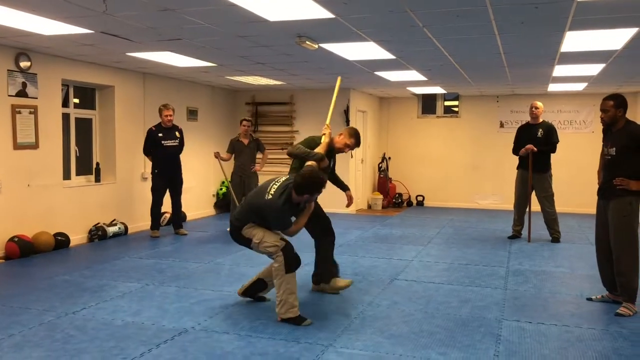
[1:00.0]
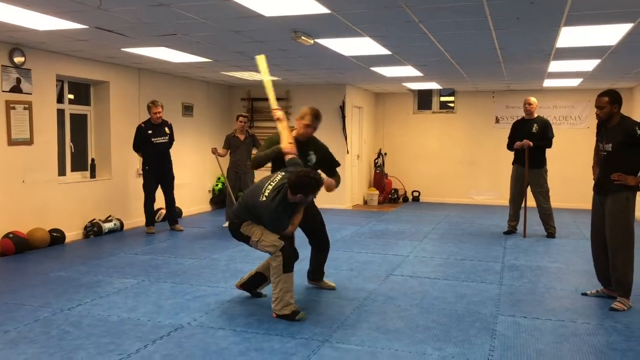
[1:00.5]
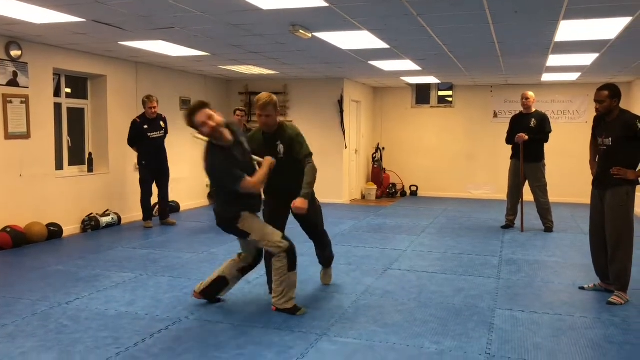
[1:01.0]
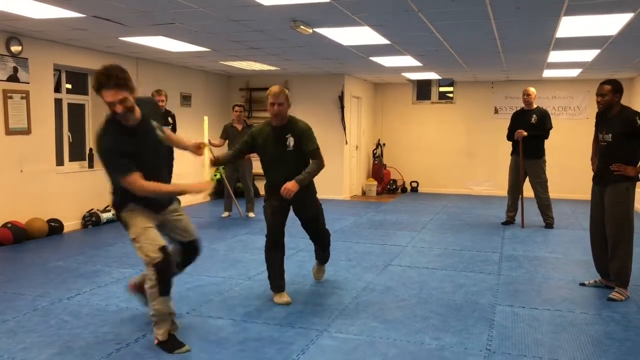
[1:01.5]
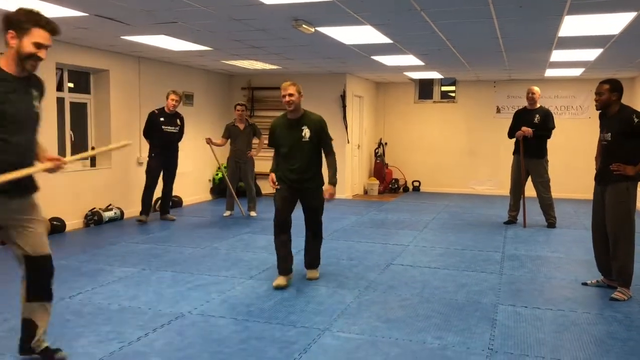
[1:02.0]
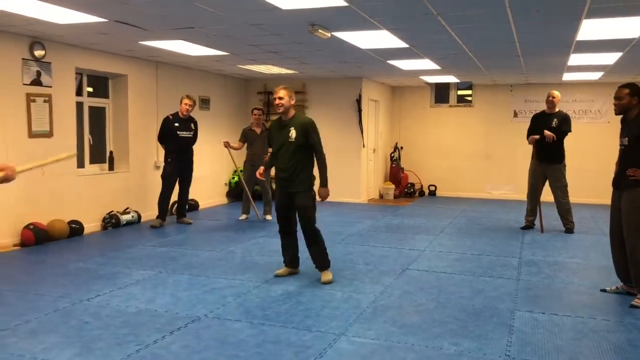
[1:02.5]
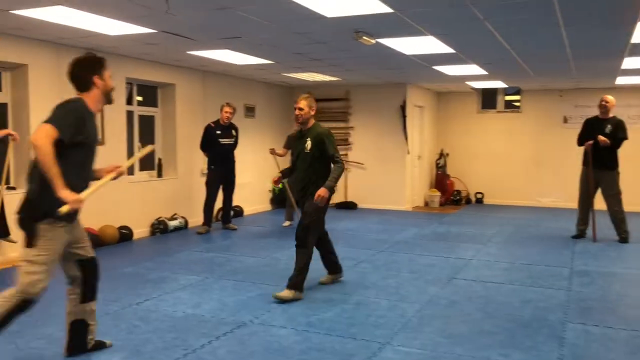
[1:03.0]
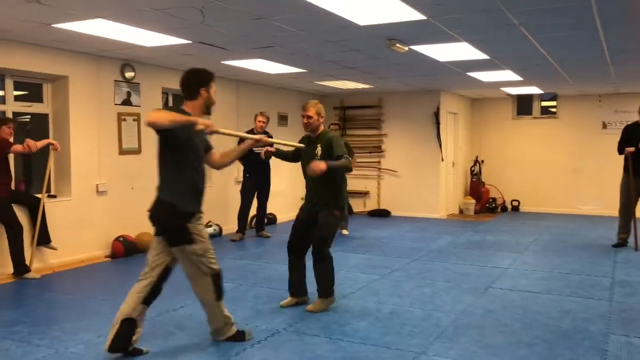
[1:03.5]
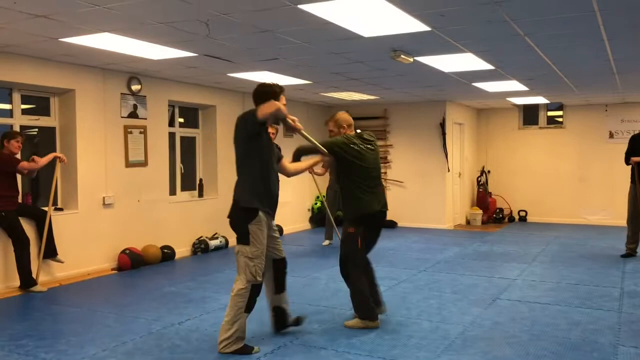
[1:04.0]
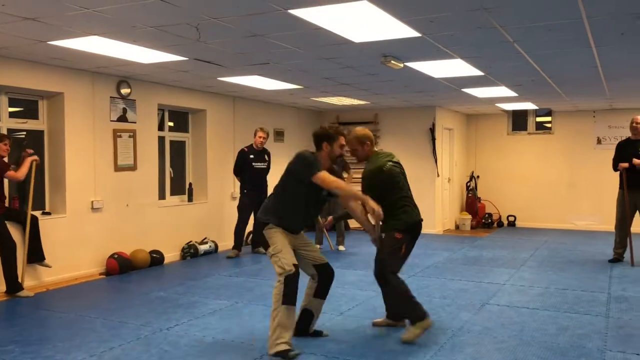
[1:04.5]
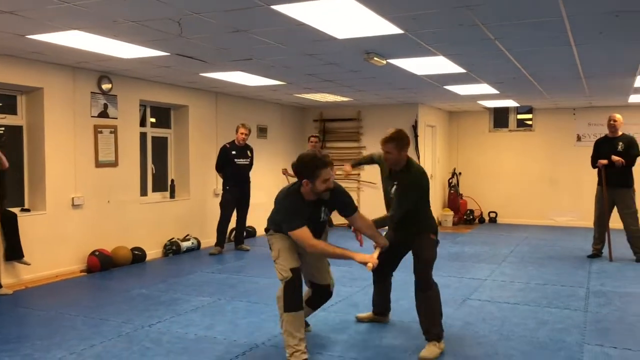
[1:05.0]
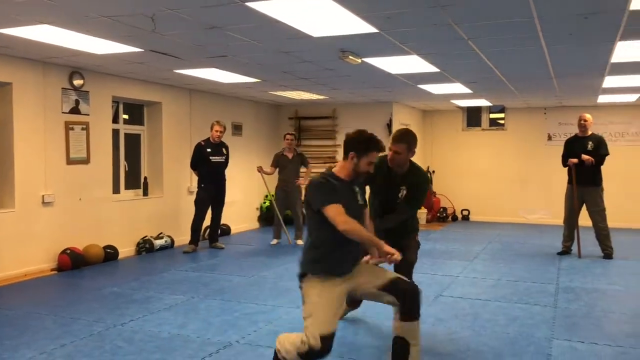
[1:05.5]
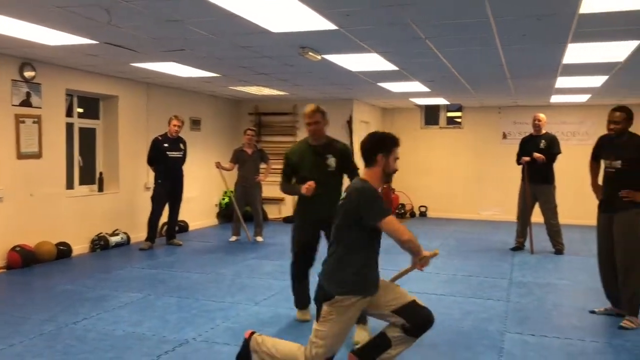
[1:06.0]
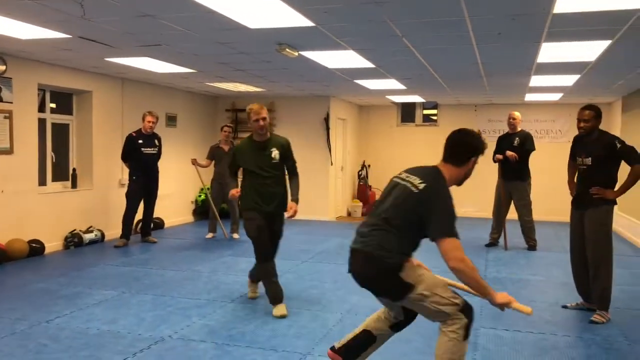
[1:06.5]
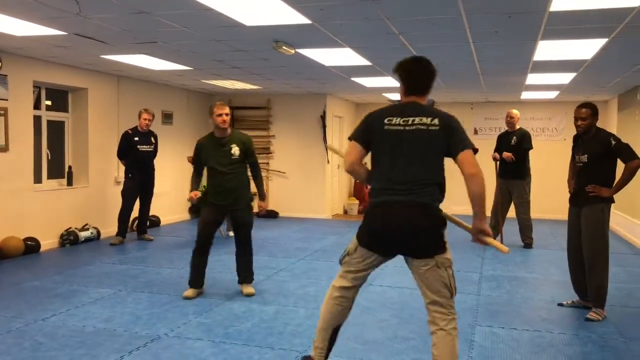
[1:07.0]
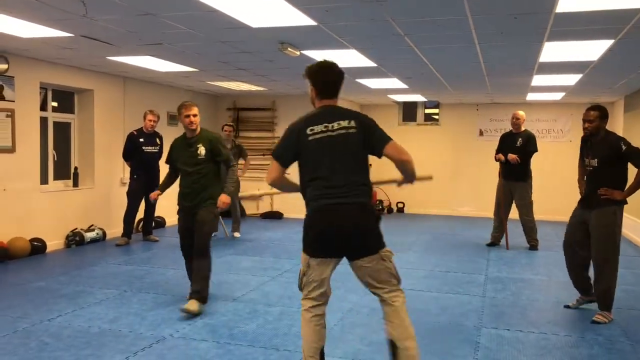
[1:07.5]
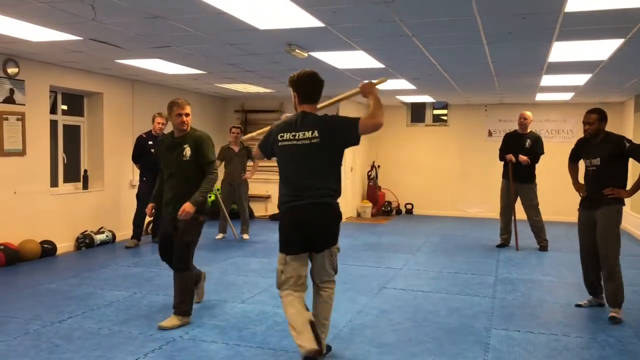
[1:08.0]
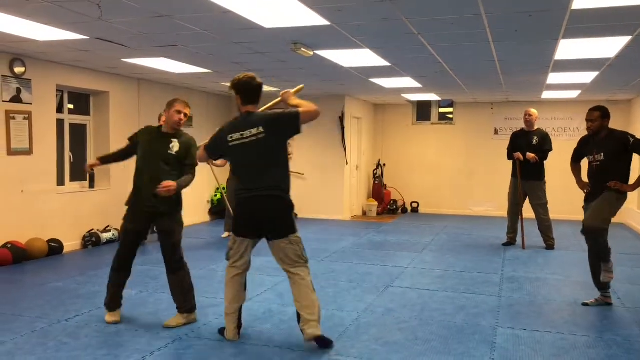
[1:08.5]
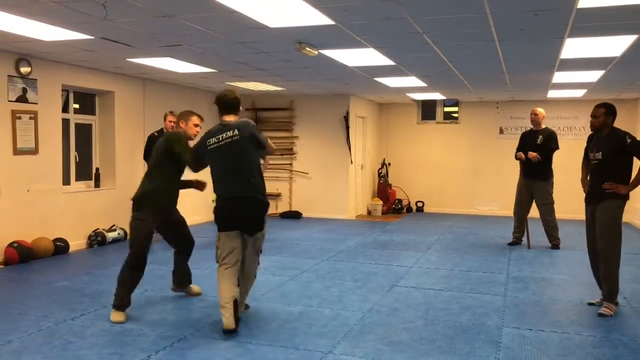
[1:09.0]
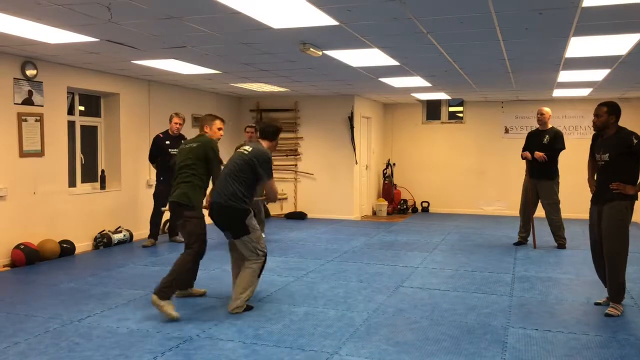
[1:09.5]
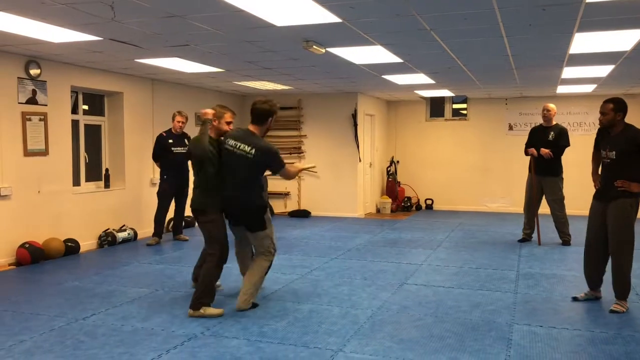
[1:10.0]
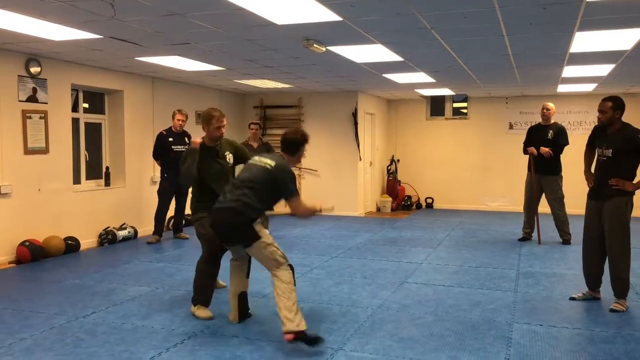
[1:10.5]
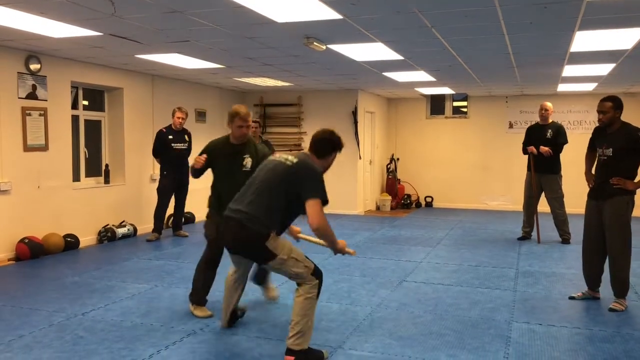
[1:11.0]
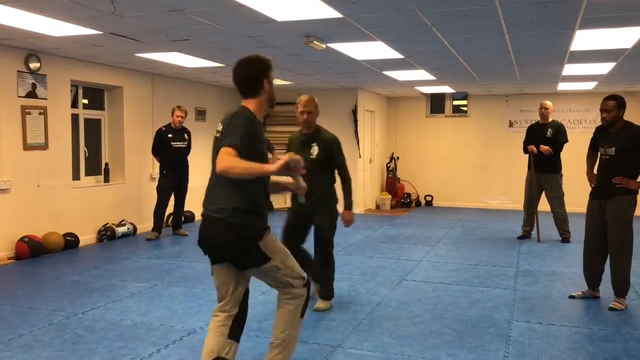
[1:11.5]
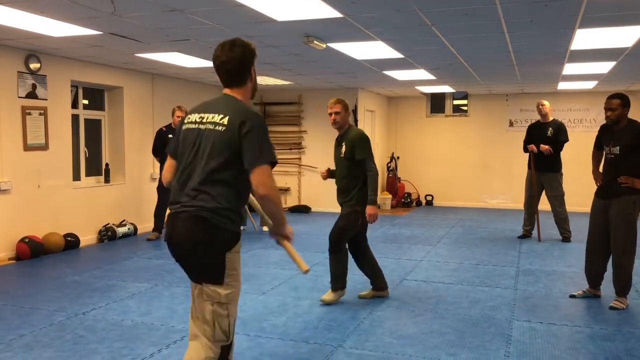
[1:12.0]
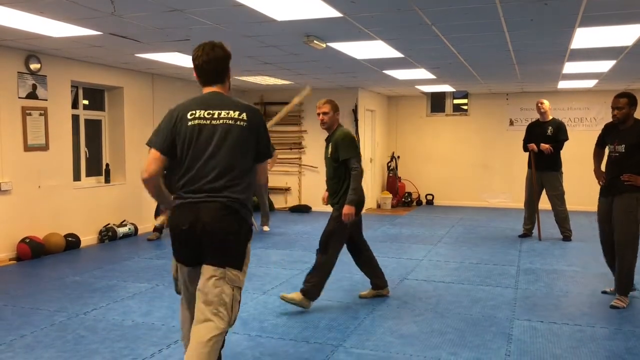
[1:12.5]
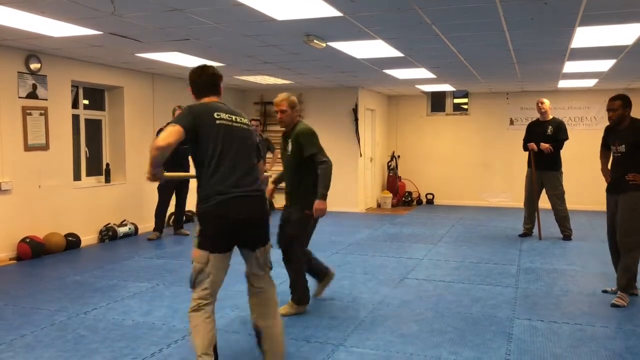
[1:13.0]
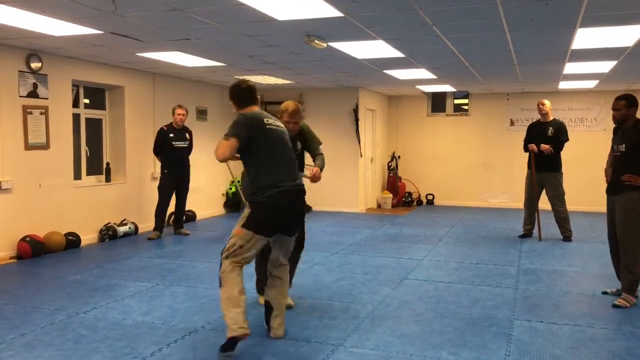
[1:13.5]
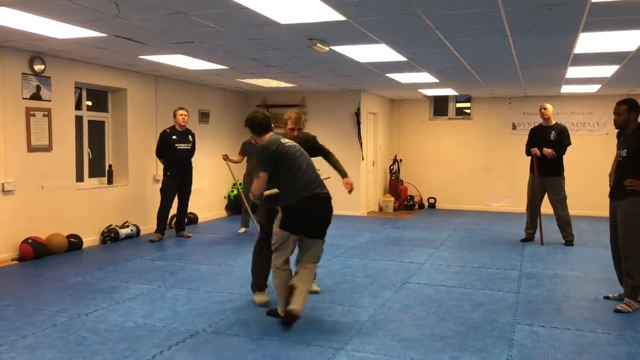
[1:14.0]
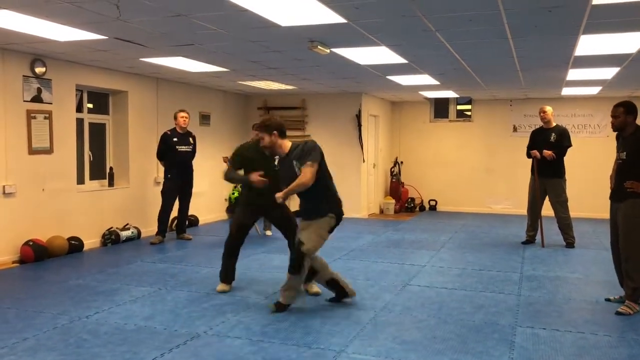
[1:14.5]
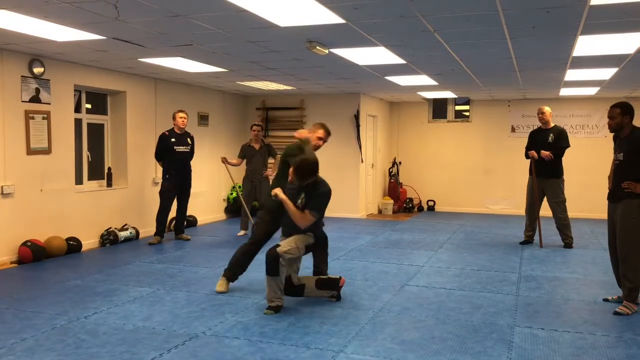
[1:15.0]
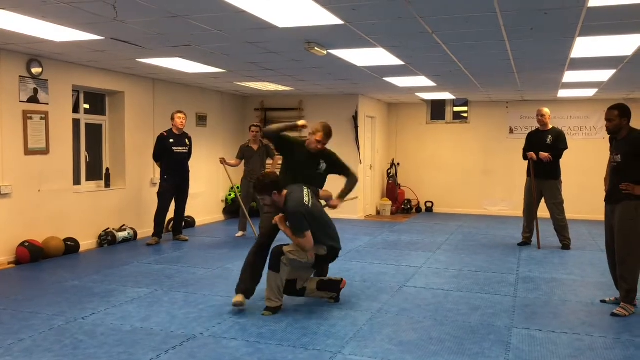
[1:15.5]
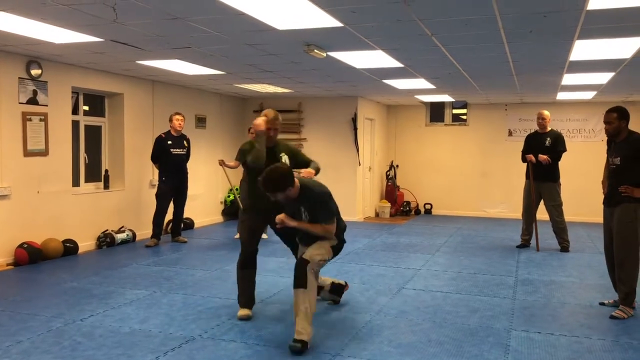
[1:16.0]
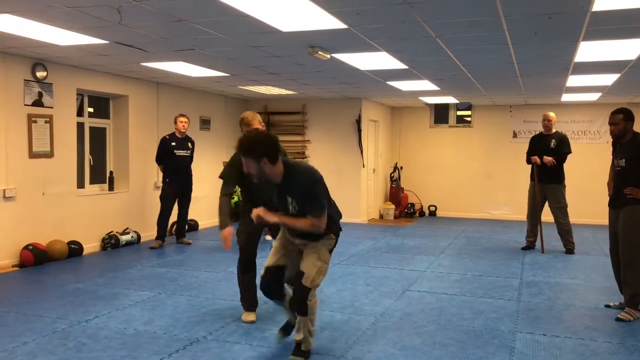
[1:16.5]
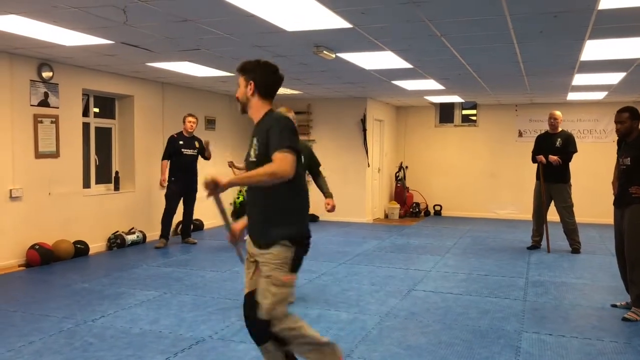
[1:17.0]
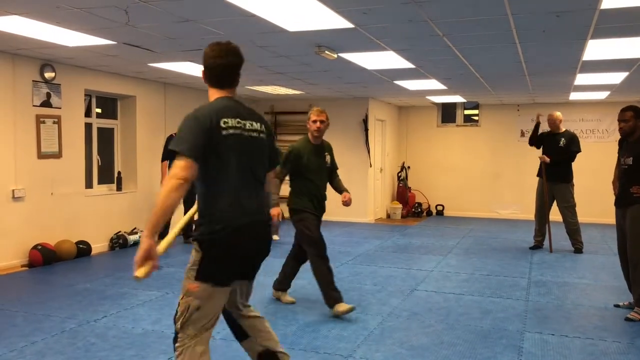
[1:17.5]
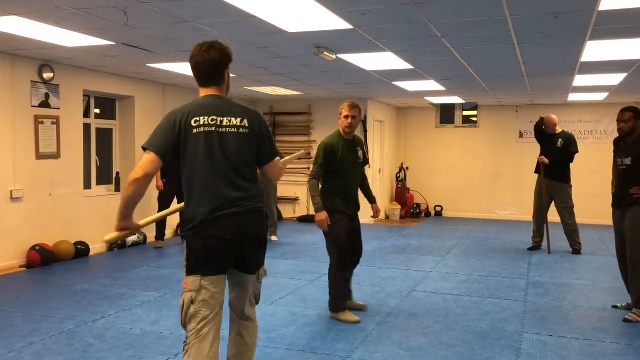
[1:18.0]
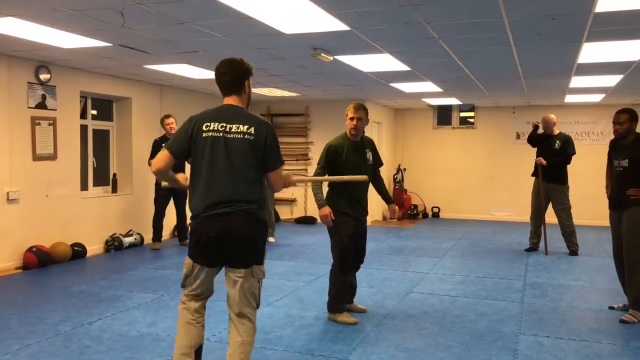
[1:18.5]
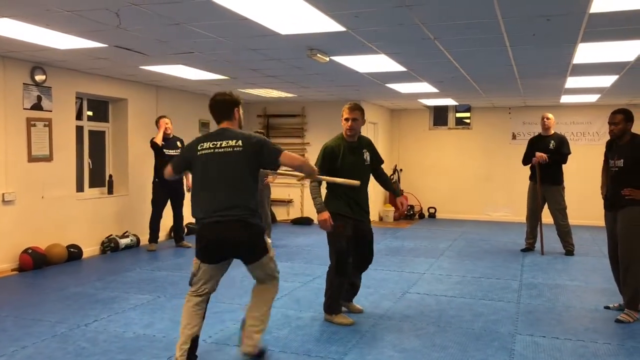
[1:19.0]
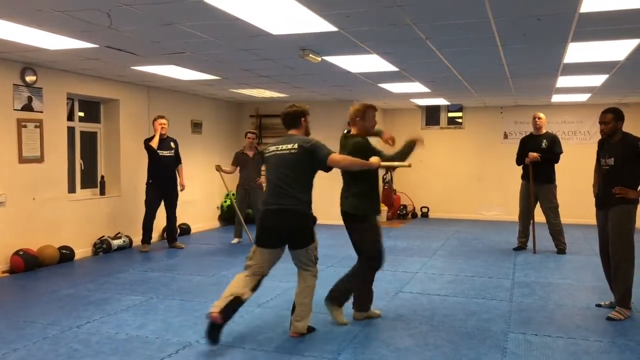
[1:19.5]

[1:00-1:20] The student crouches, facing slightly toward the camera, with the pole in his hands being shoved upward toward his left side; his arm and the pole both go across the upper right shoulder area of the instructor. The instructor has his right arm around the student's left arm, as if to hold it there and possibly take the pole away. The instructor moves forward, pulling the pole downward to his right side, and the student stands up and backs away toward the camera side, backing up a few feet with a smile on his face. The instructor also smiles and says something to the class. The student then holds the pole horizontally, pointing toward the instructor's chest, and pushes forward. The instructor uses his left arm to try to take the pole away, and the student leans forward a bit and crouches down to avoid this. The instructor then seems to playfully hit the student on the back.